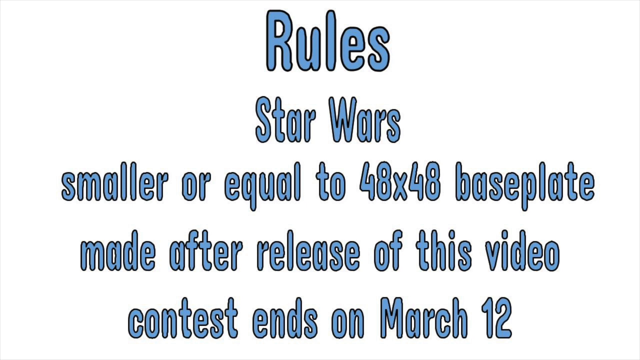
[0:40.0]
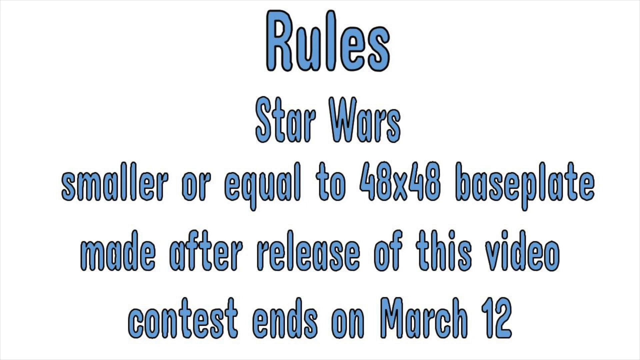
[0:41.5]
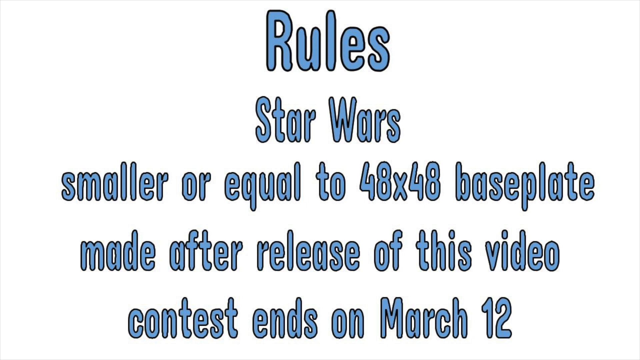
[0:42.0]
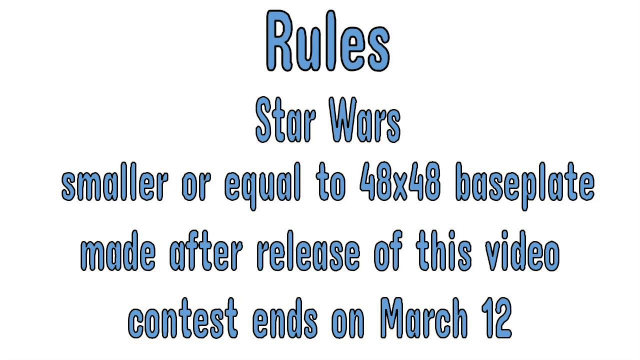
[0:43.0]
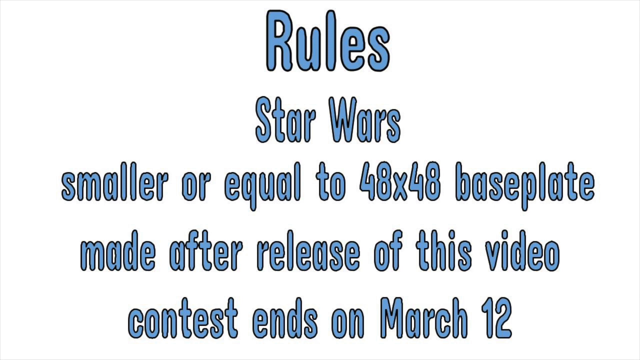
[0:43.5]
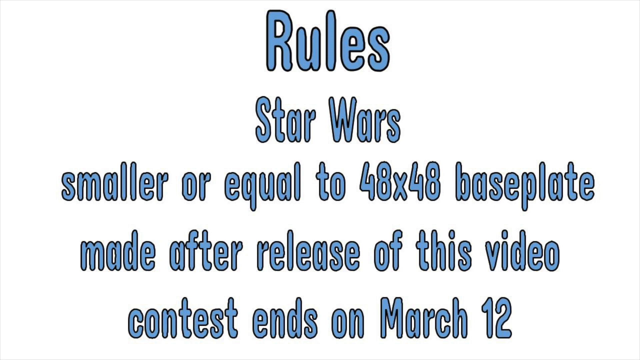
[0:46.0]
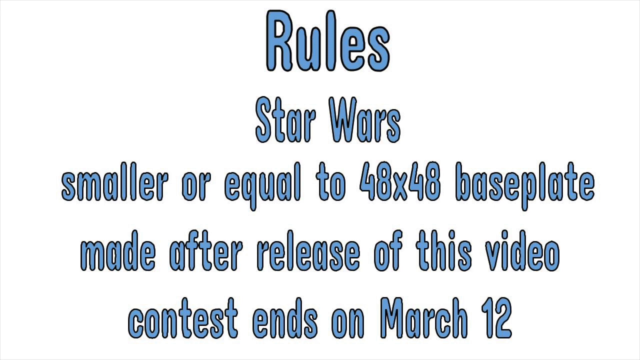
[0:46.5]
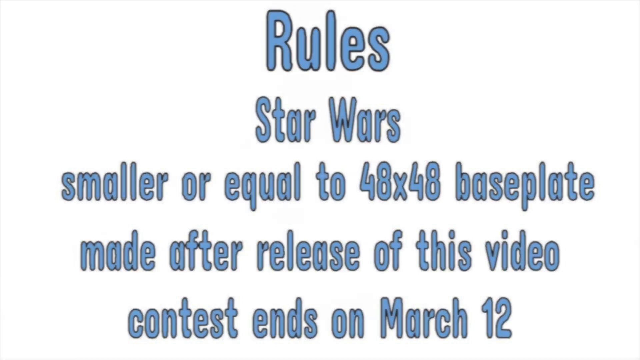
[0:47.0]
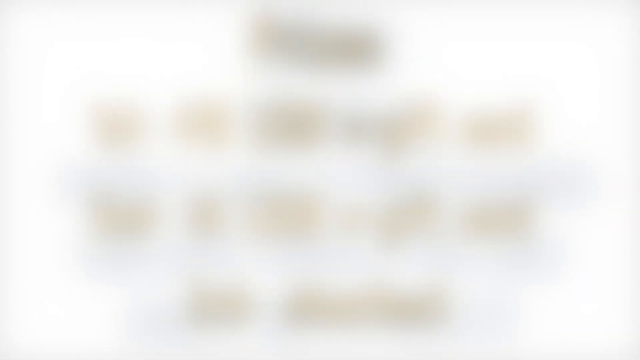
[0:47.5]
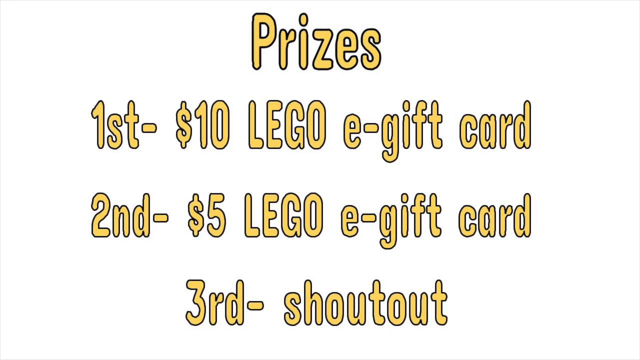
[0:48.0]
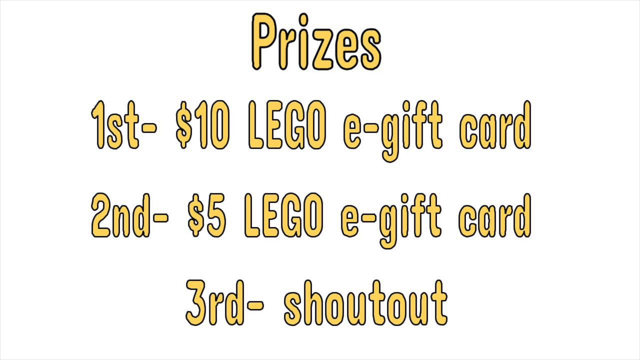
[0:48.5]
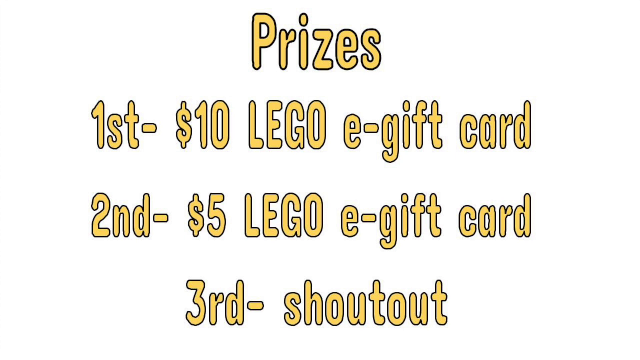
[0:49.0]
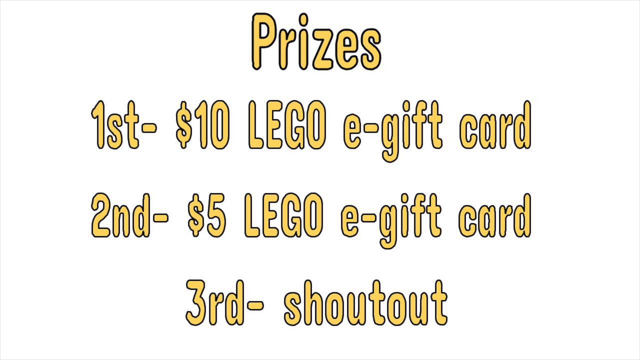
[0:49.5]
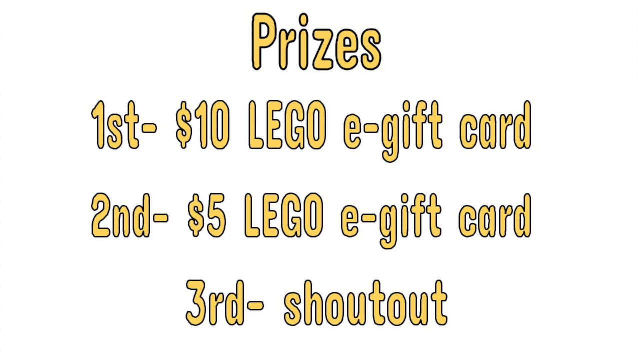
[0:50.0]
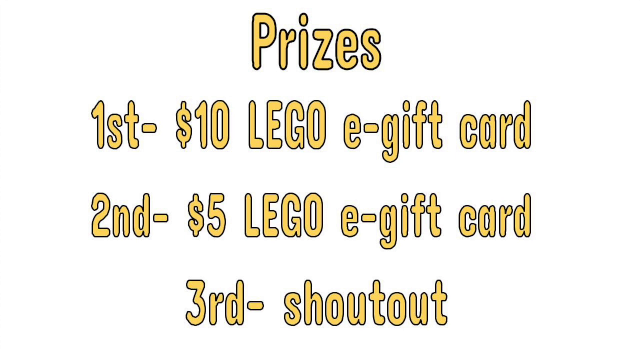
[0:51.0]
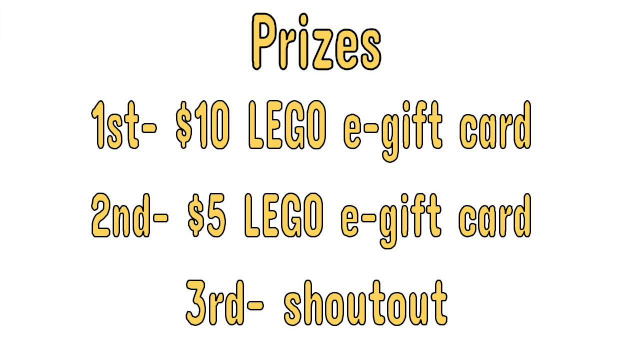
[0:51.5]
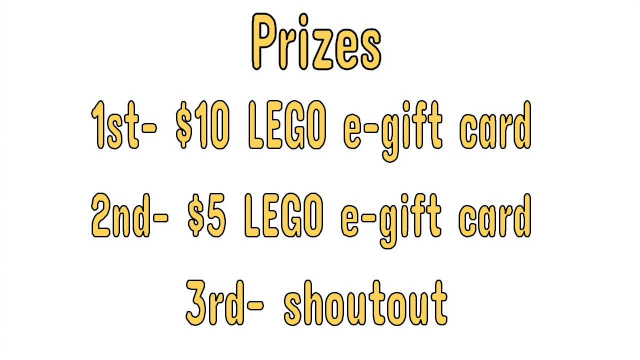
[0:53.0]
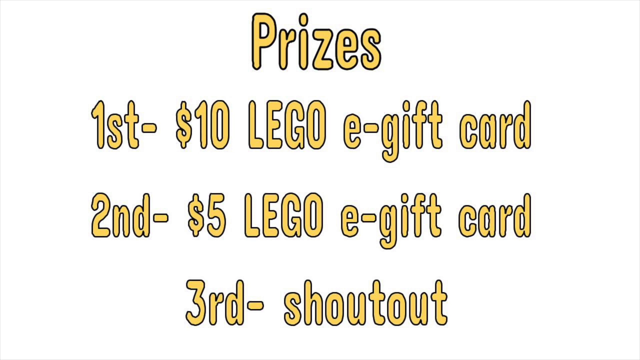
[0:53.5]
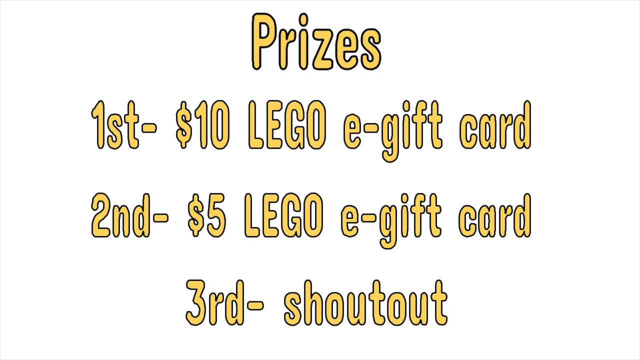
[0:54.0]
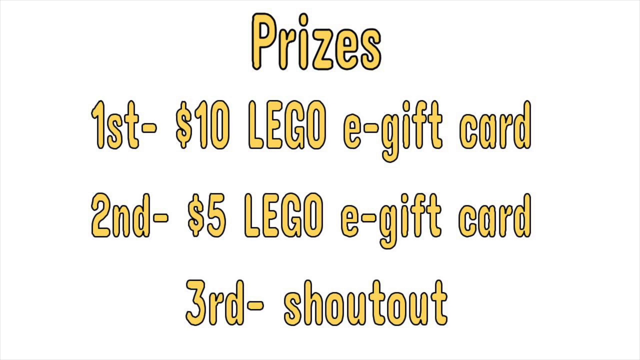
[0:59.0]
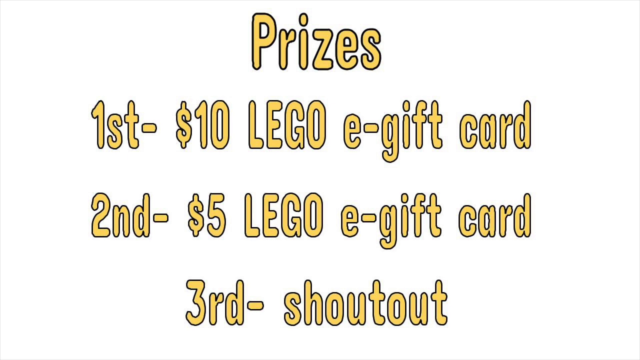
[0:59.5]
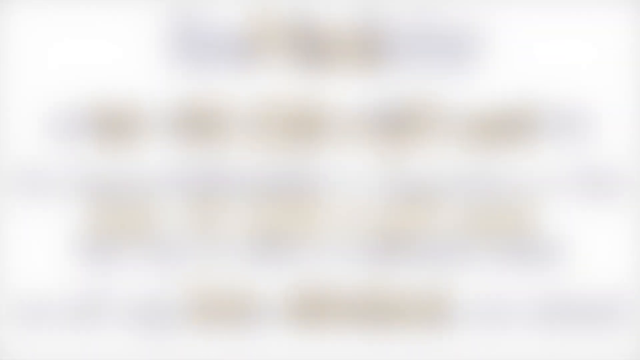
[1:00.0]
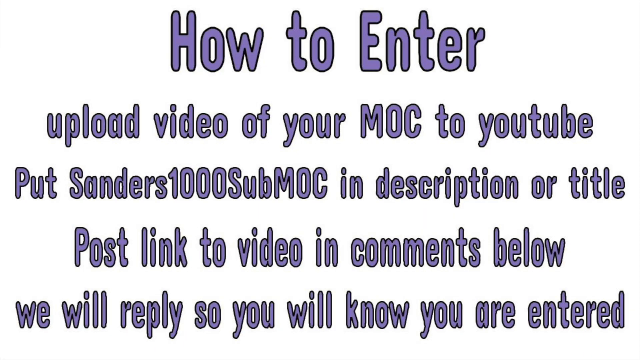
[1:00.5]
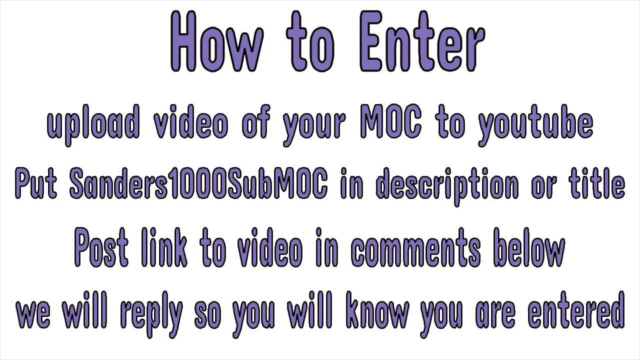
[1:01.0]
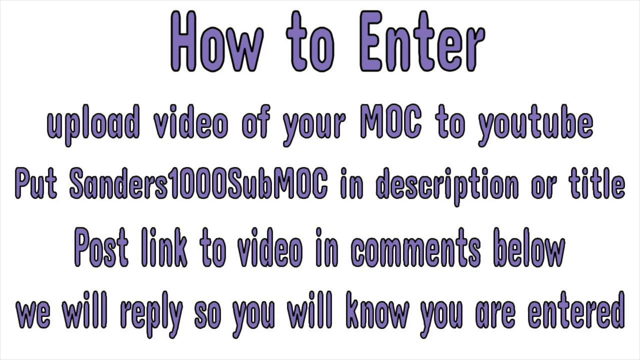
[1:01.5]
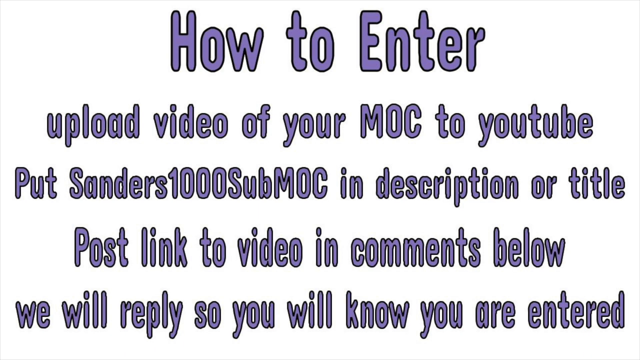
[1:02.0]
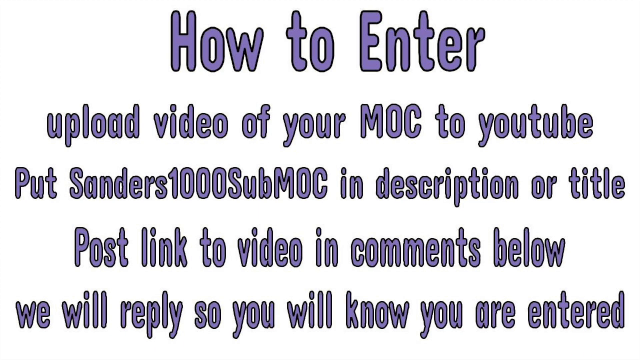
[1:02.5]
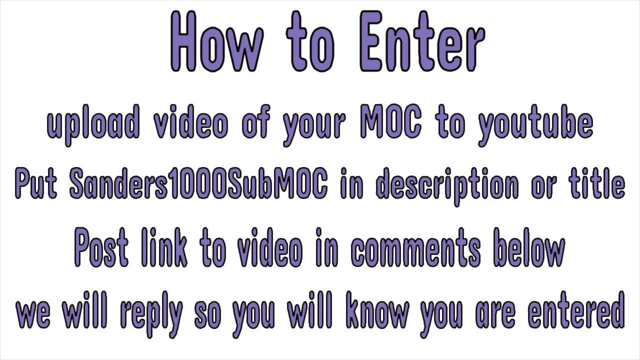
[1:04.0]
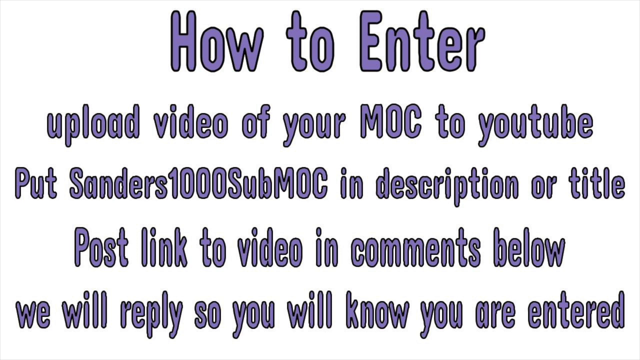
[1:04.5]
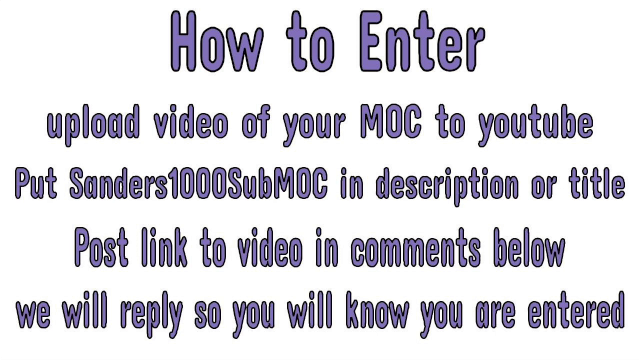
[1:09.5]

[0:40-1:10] The rules page remains, stating the contest ends on March 12th and the base plate must be smaller than or equal to 48 by 48. Then text reads "prizes first place $10 Lego e-gift card second place $5 Lego e-gift card third place shout out." Next it says "how to enter upload video of your MOC to YouTube put Sanders 1000 sub MOC in description or title post a link to video in comments below we will reply so you know you are entered."